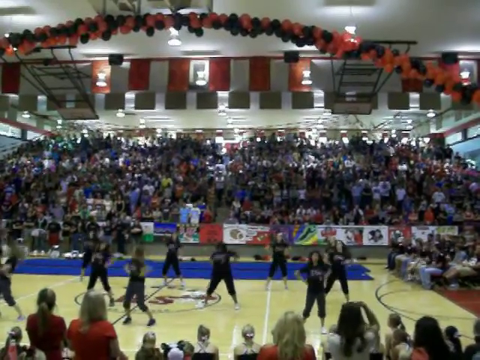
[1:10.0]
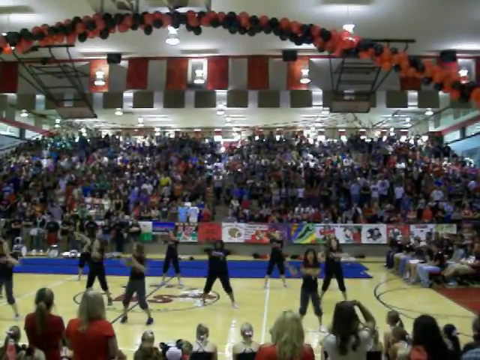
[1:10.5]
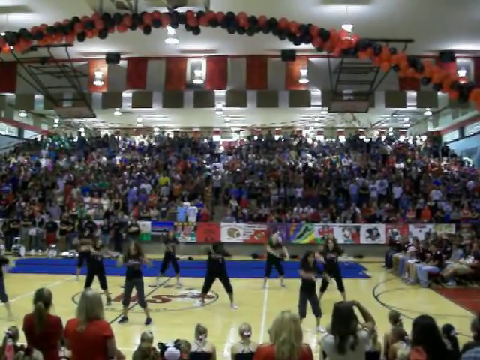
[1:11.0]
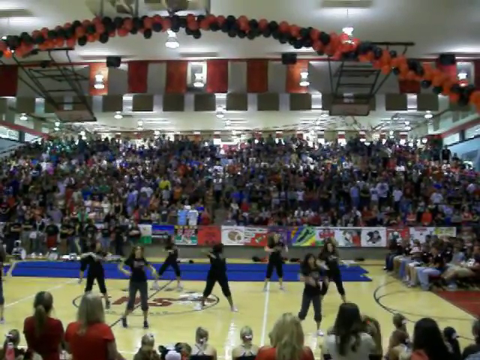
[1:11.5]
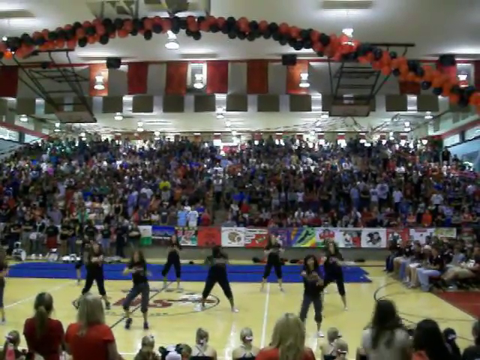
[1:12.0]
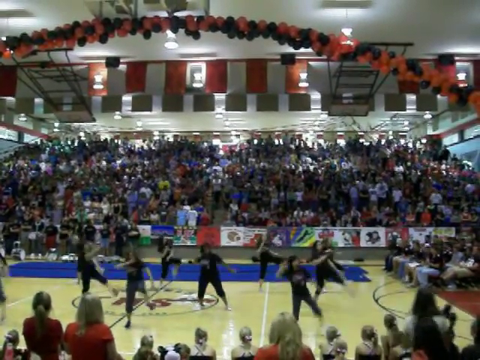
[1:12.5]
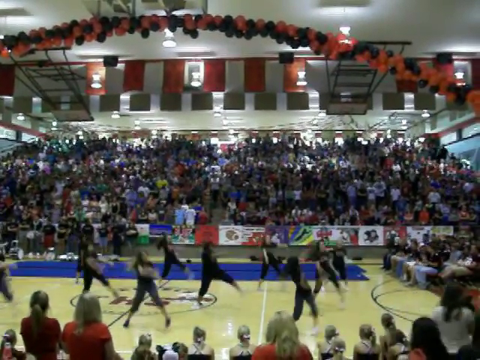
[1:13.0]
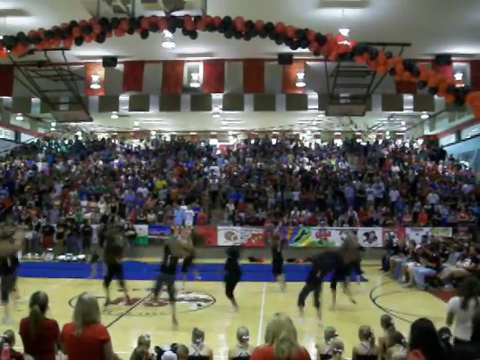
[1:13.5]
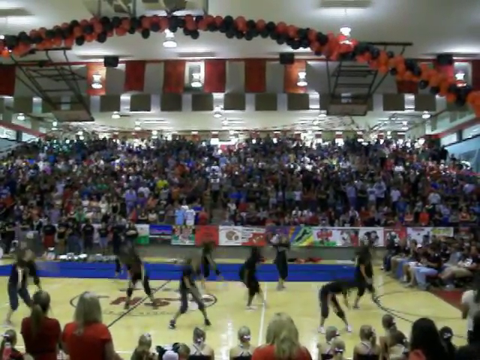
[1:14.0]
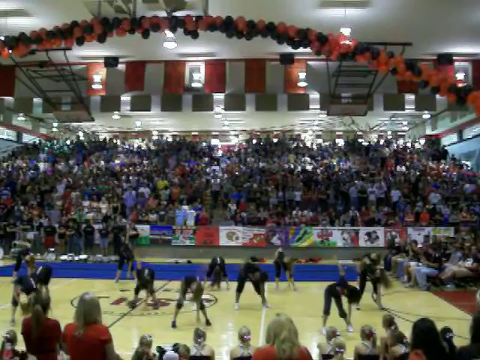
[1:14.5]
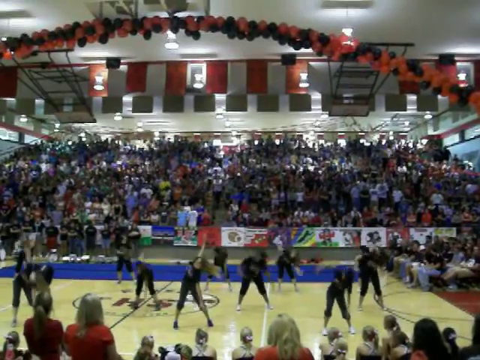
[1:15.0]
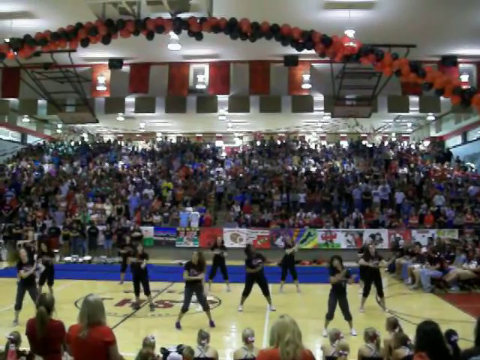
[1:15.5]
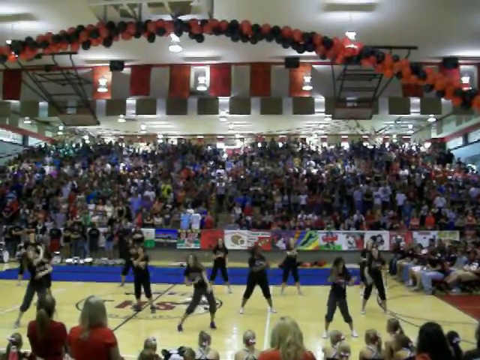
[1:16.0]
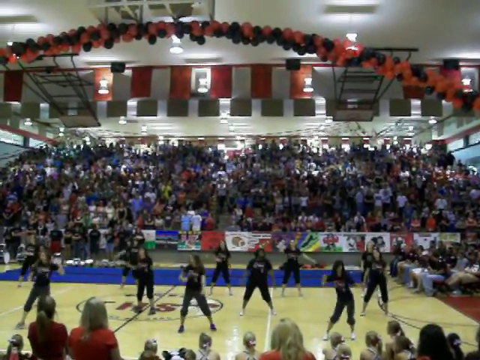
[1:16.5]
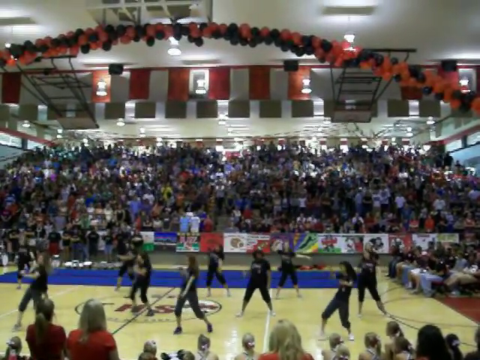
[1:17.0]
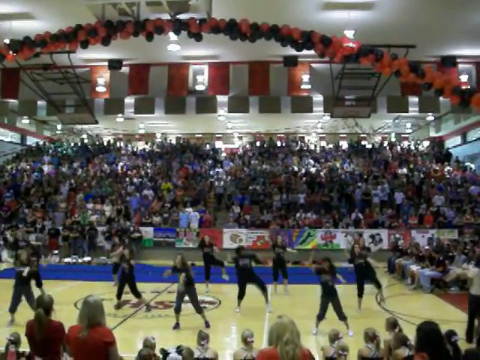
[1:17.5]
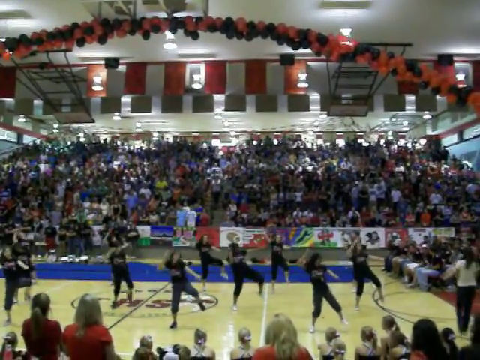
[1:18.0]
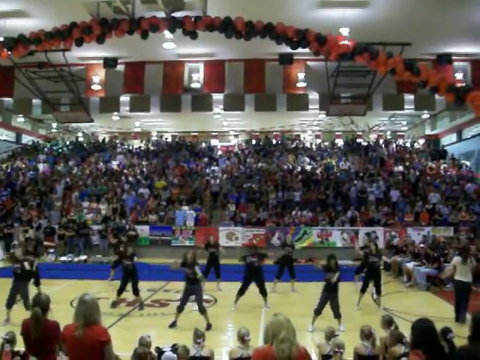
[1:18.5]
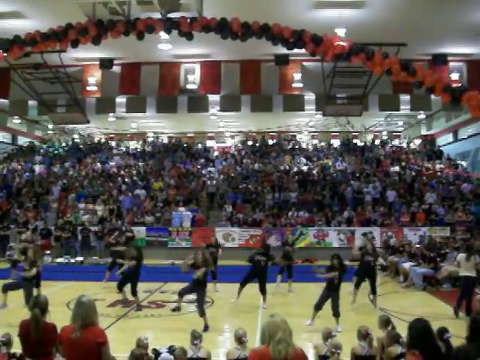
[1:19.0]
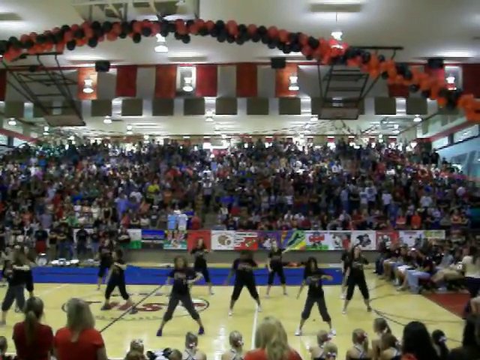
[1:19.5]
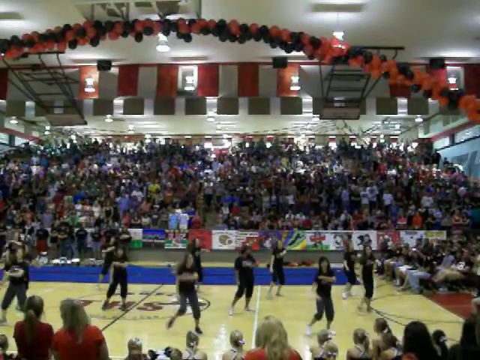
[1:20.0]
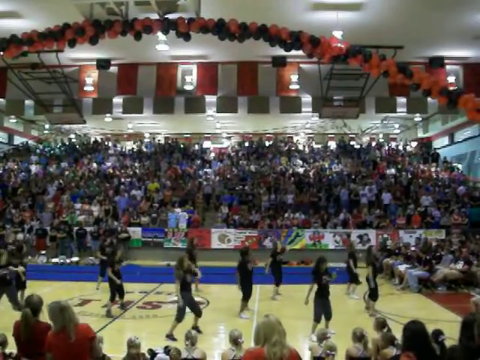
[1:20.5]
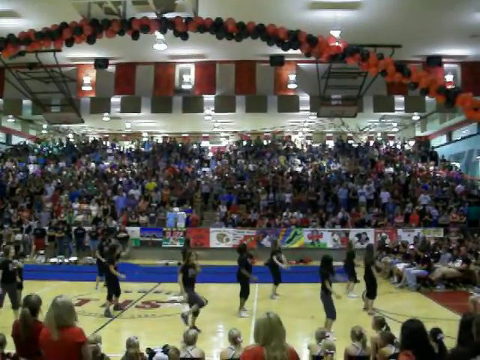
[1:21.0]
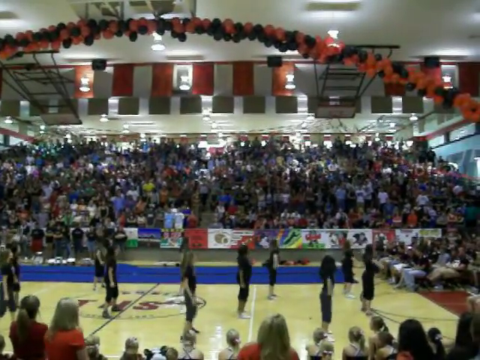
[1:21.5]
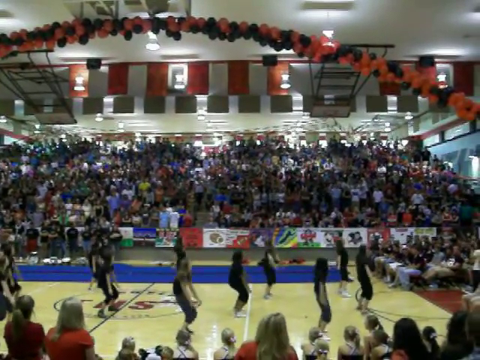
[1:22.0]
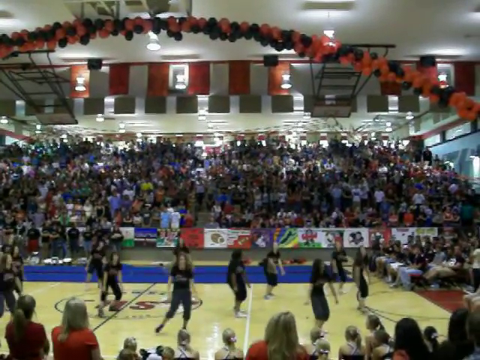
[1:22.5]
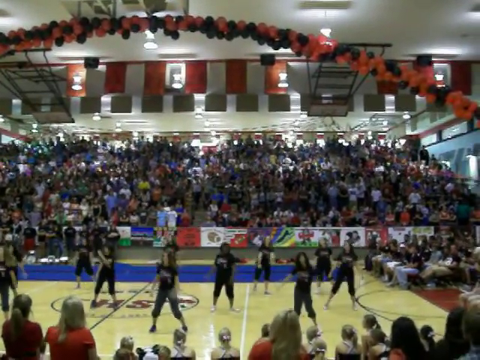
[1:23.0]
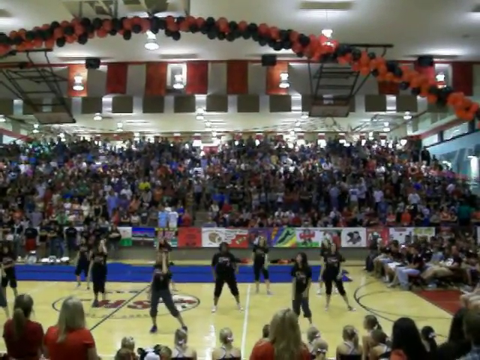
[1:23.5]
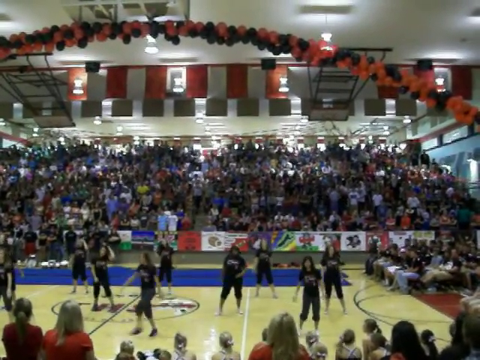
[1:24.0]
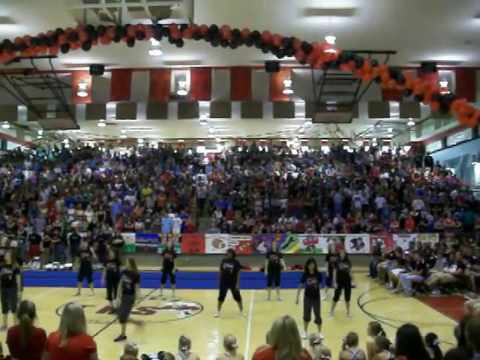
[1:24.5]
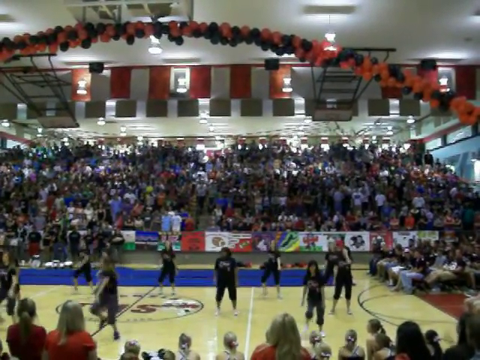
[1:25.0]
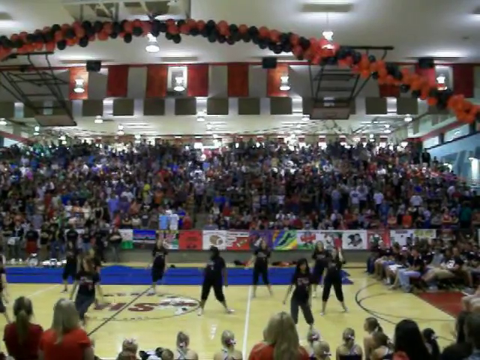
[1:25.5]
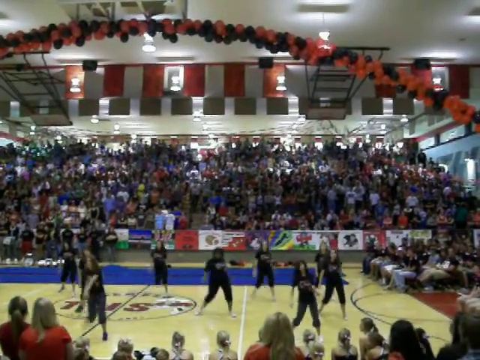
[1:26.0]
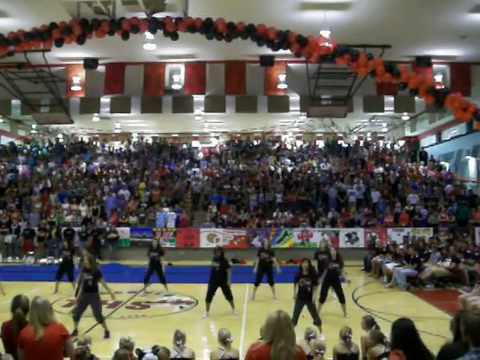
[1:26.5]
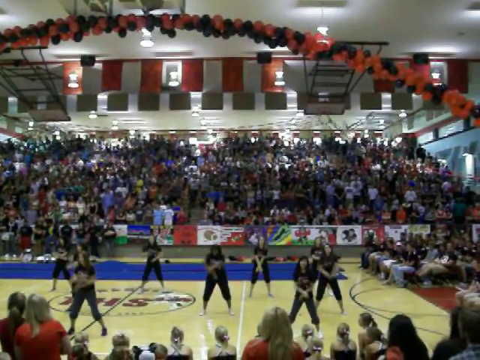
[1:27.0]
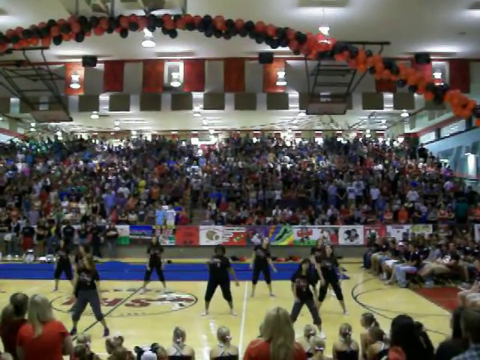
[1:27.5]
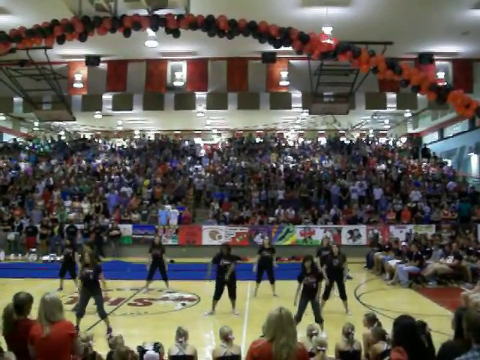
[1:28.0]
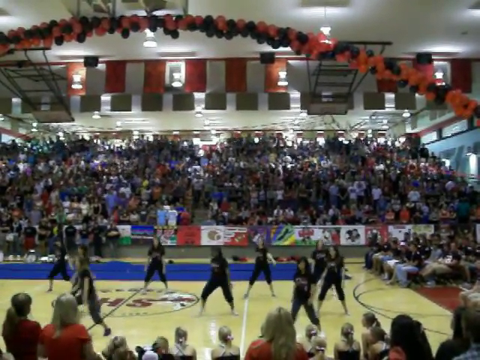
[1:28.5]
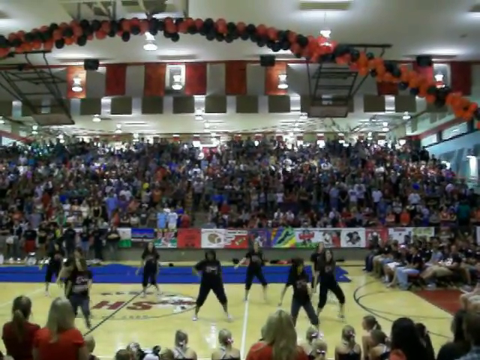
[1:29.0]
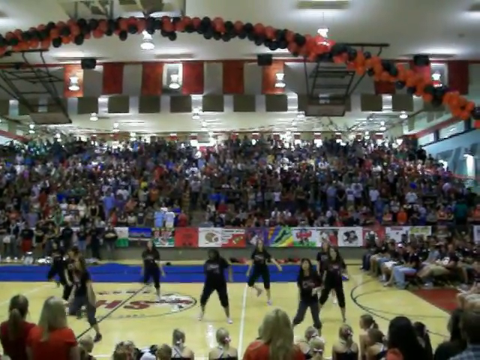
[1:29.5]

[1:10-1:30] A group of women, apparently a high school or college dance team, cheerleading squad or pep squad, dances in a gym. An audience of probably a few hundred people is in the stands, and a few people are seated on the court on the right side; they do not appear to be players and could be teachers, students or special guests. The women are mostly facing the camera and dance in unison, moving to the left and right a little and sort of stepping in place. A few people are visible in the foreground too, suggesting there may be more people outside the frame.